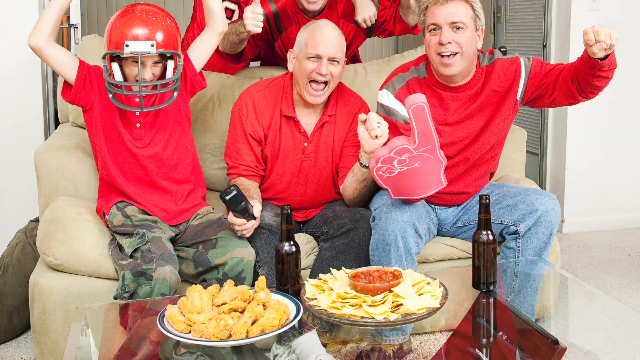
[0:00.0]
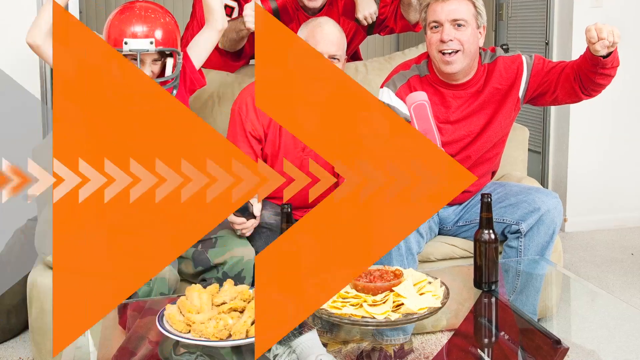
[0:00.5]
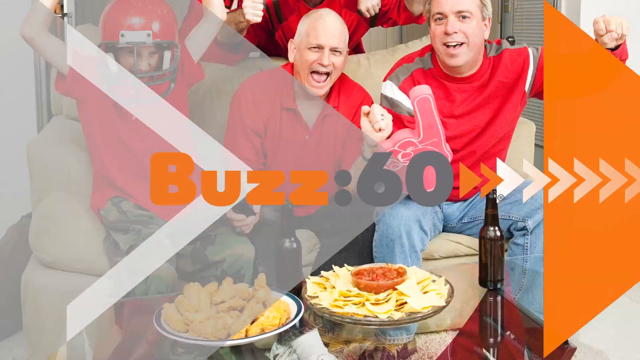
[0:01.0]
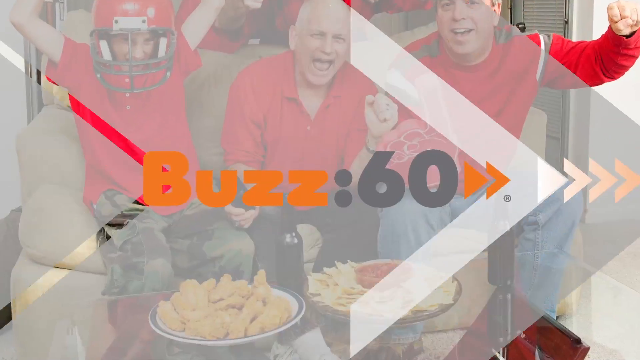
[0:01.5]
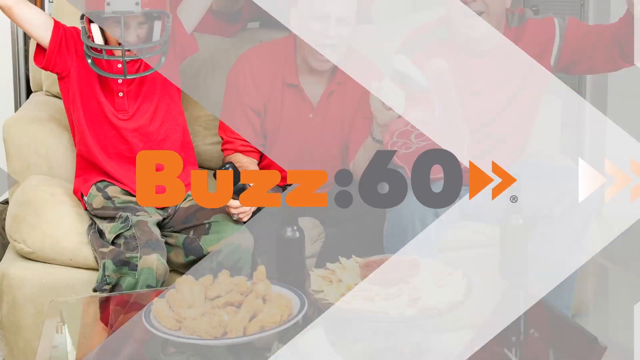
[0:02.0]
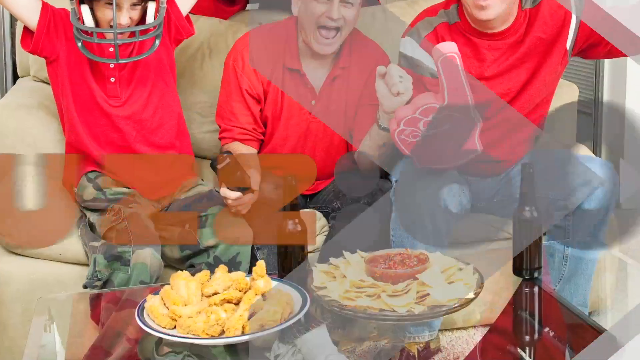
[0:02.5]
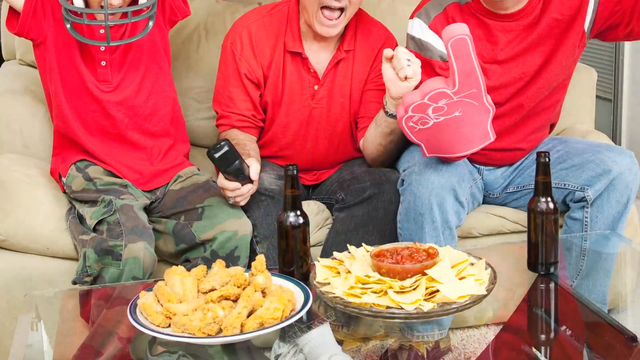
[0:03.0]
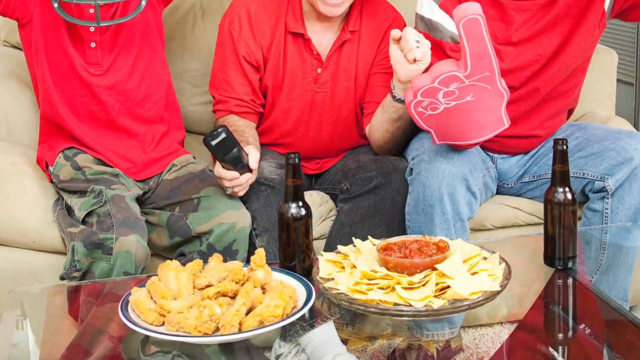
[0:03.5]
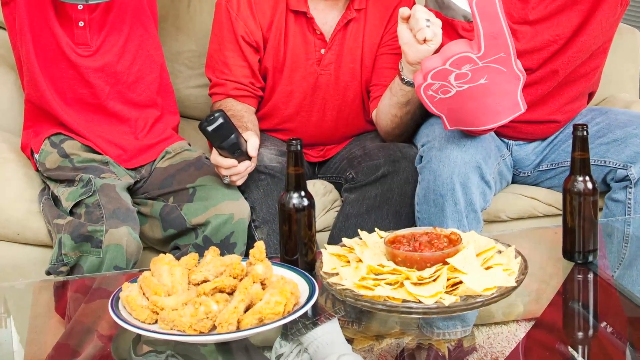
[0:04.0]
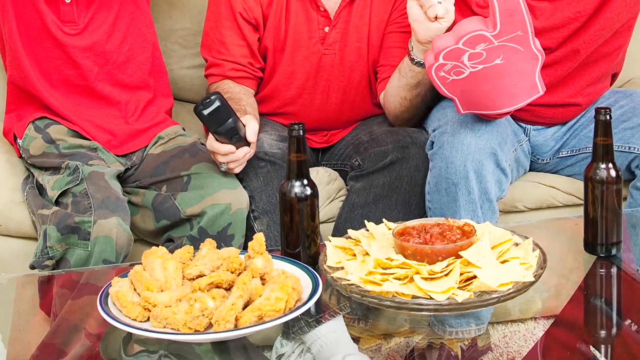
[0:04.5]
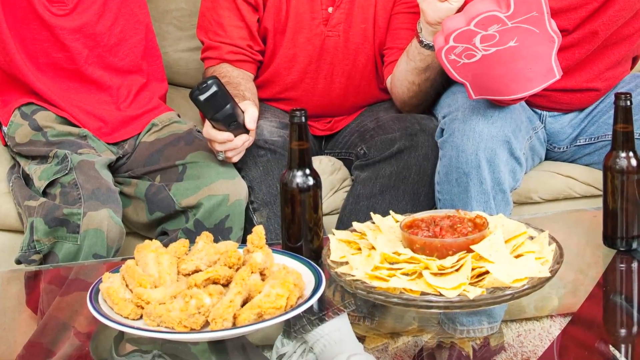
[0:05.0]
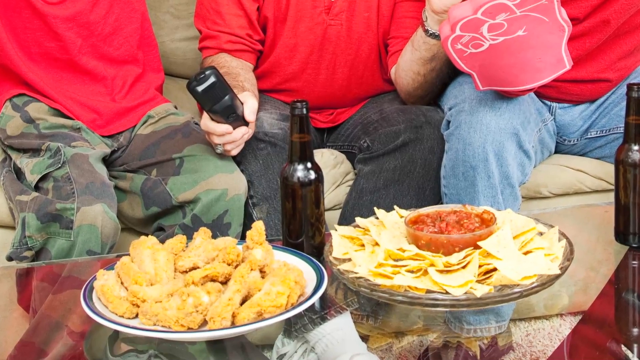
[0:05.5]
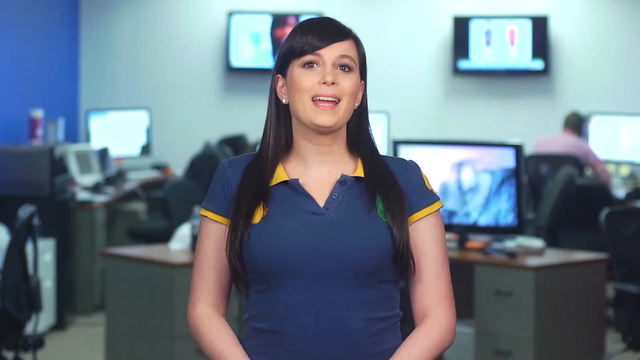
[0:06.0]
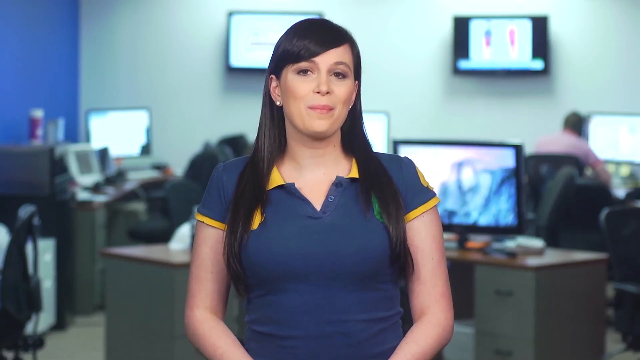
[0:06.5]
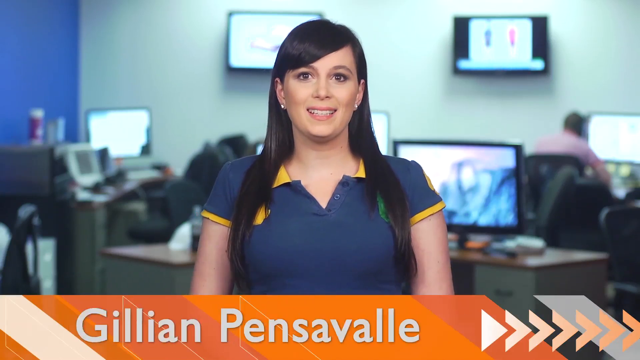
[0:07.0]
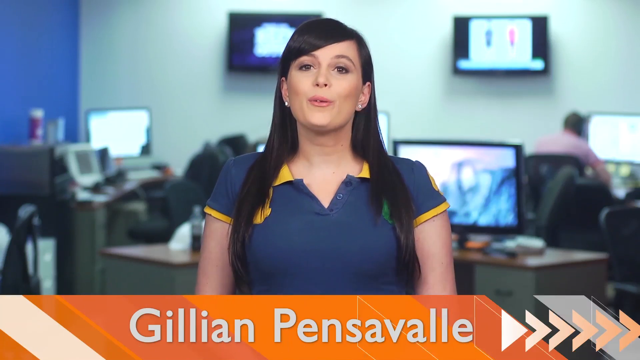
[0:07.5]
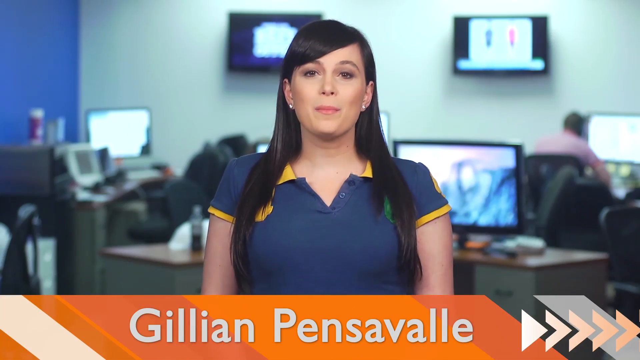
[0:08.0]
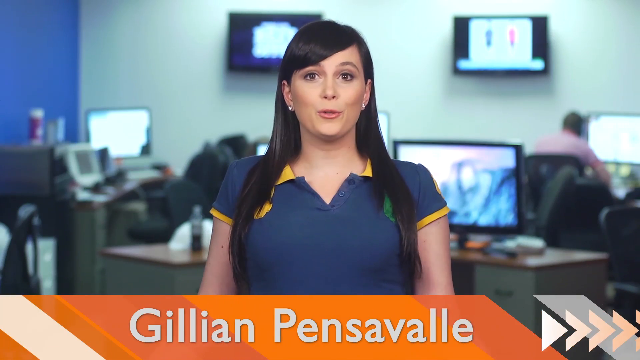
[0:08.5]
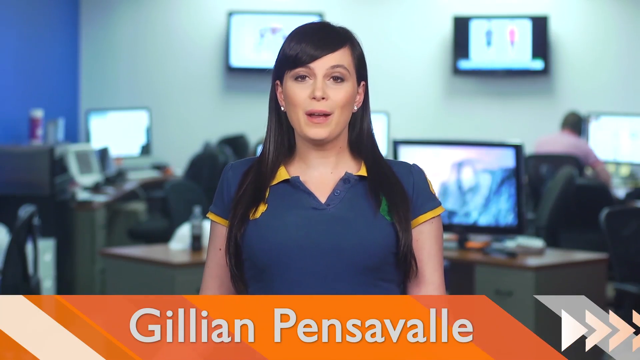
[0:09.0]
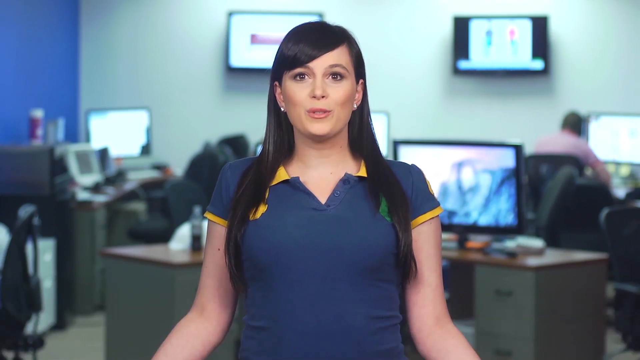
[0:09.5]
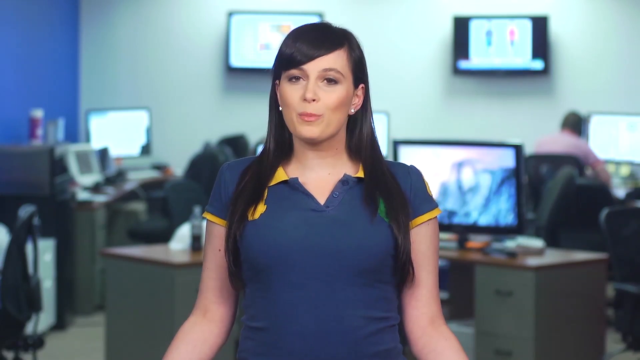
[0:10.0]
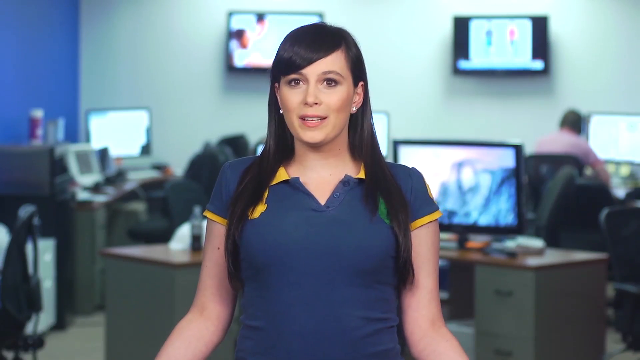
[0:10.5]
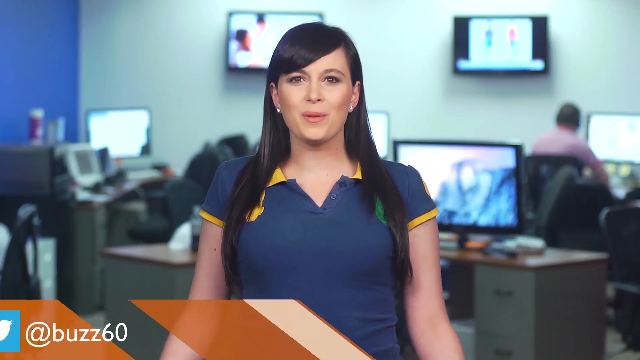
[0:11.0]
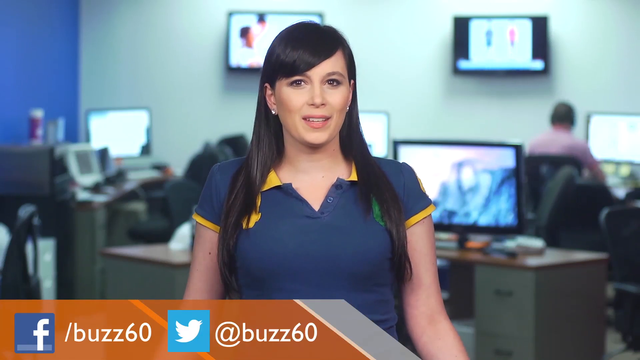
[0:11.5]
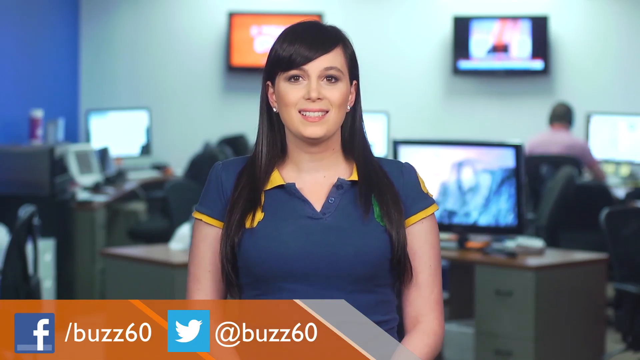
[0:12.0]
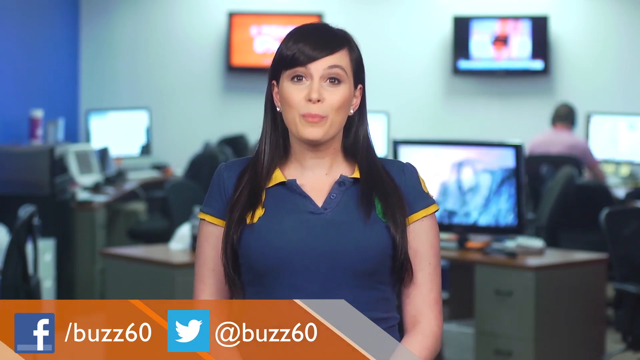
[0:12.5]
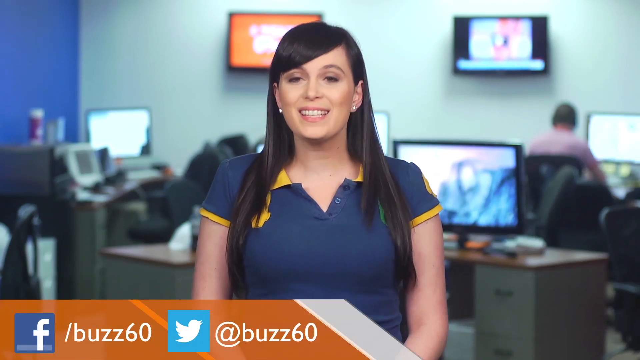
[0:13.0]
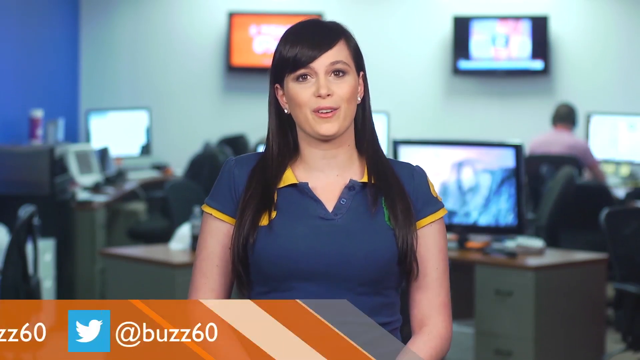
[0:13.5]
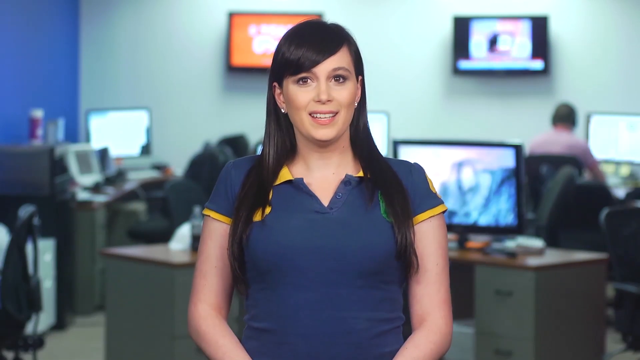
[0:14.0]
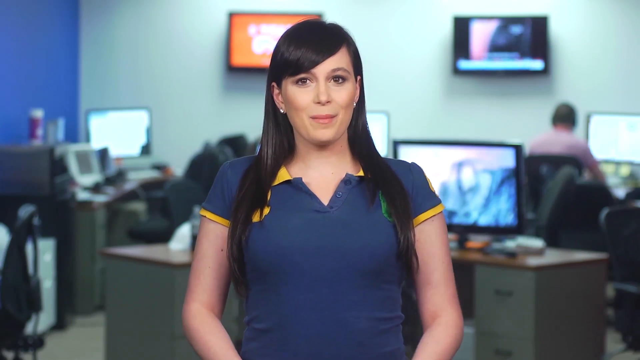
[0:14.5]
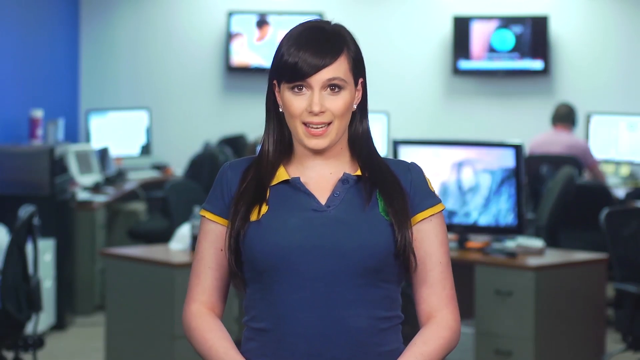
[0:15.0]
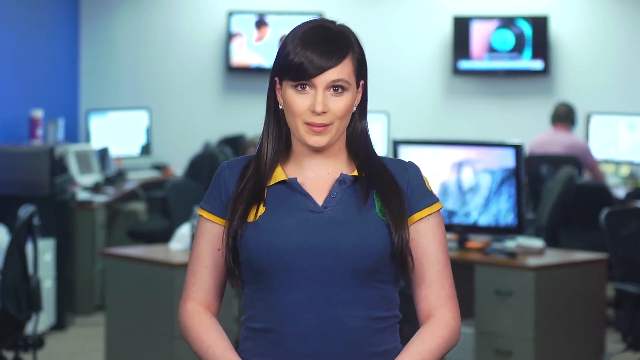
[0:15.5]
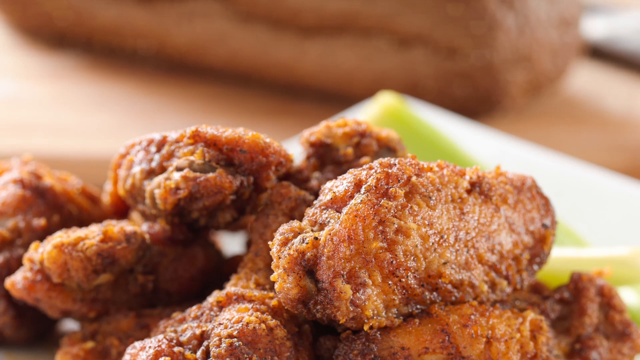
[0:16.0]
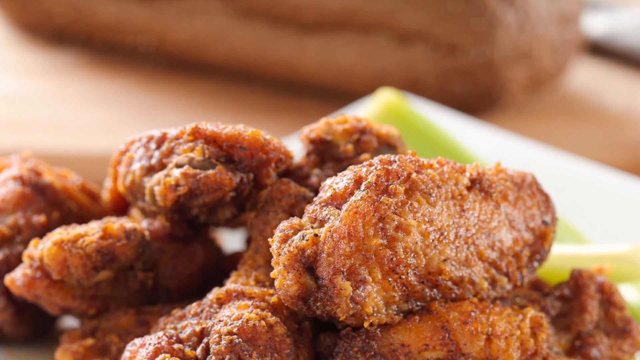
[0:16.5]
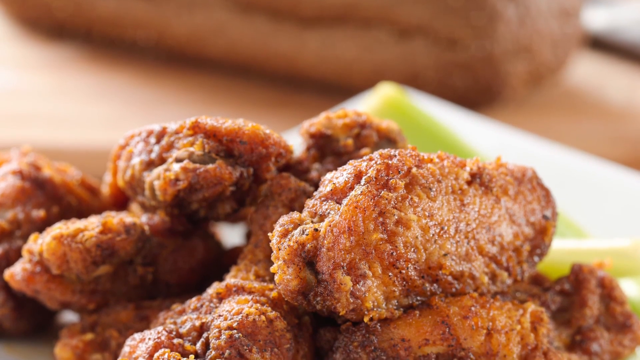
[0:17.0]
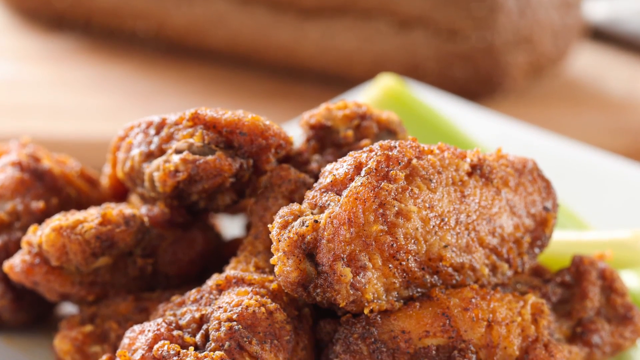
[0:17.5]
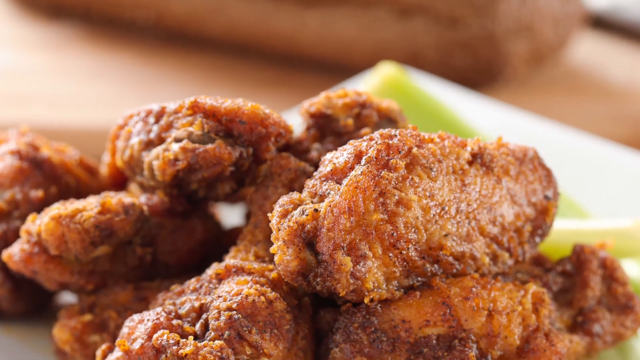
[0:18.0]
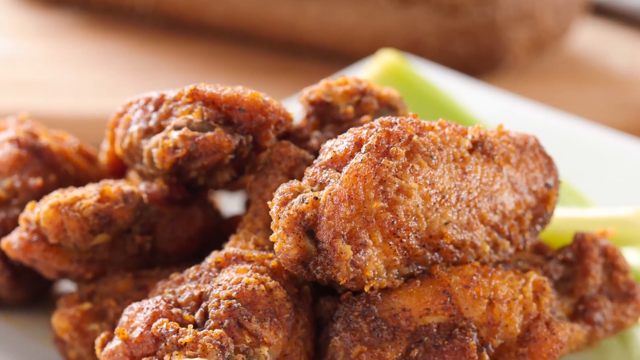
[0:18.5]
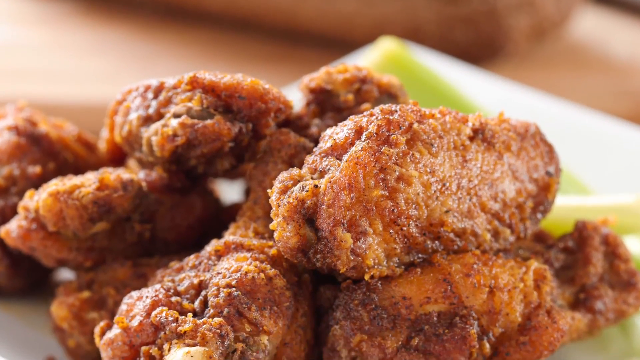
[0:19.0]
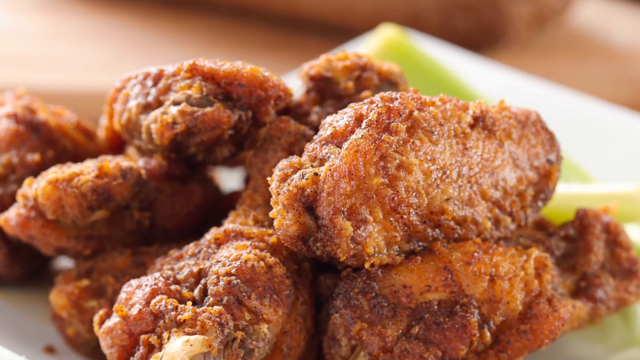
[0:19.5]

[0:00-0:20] Little boys are putting on red helmets, seemingly in support of a golf team. On the table are foods such as chips, sauce and chicken, along with two black bottles of what is apparently alcohol. An advert appears, seemingly from both 60 television. A TV presenter, Gillian Pensaville, a white woman in a blue top, presents in a newsroom. Behind her are screens, apparently about five televisions. Their Facebook and Twitter handles appear on the screen, and a picture of chicken is also shown.